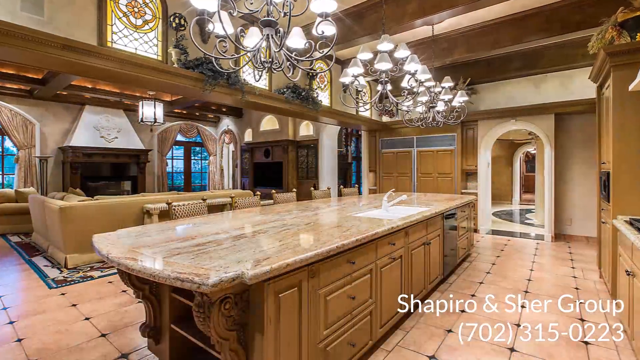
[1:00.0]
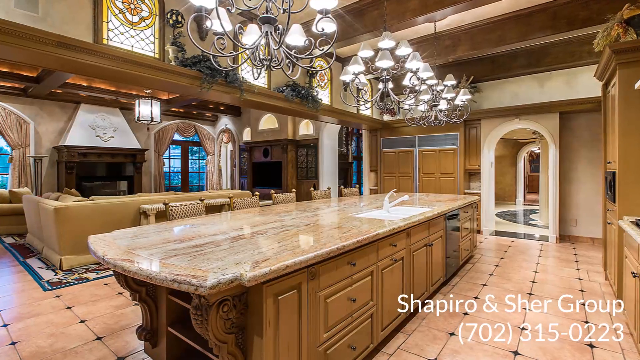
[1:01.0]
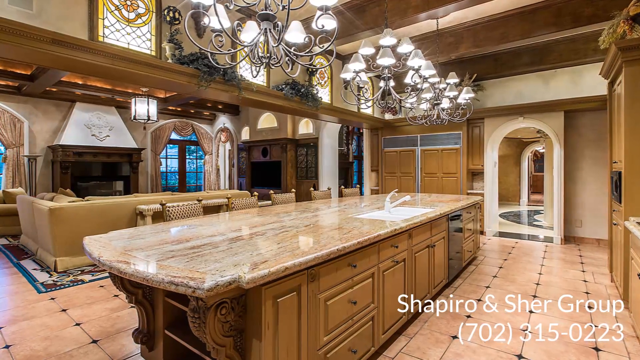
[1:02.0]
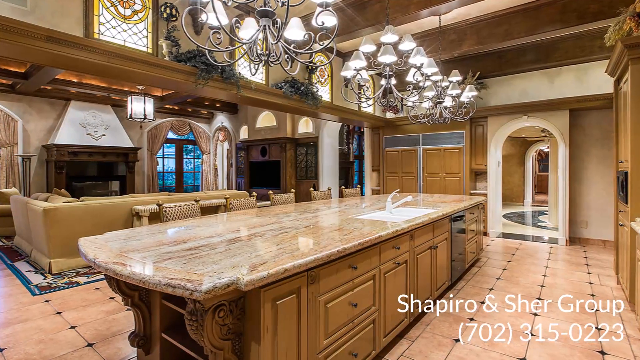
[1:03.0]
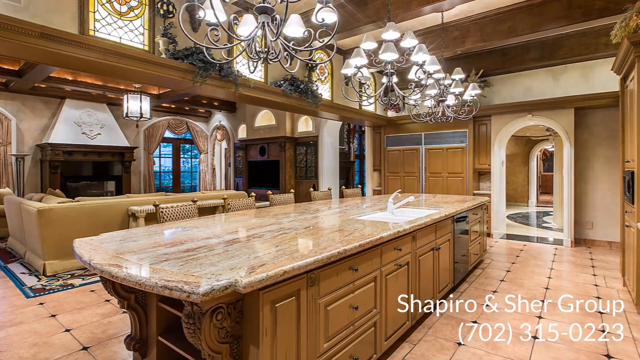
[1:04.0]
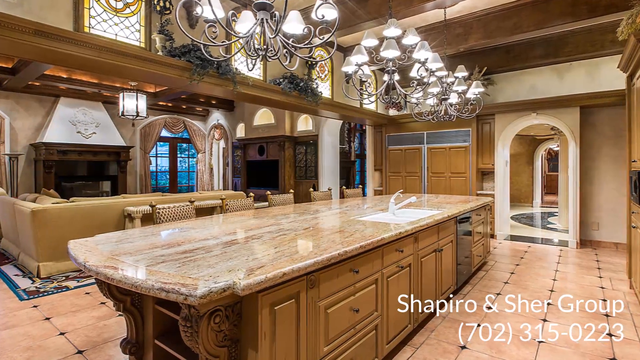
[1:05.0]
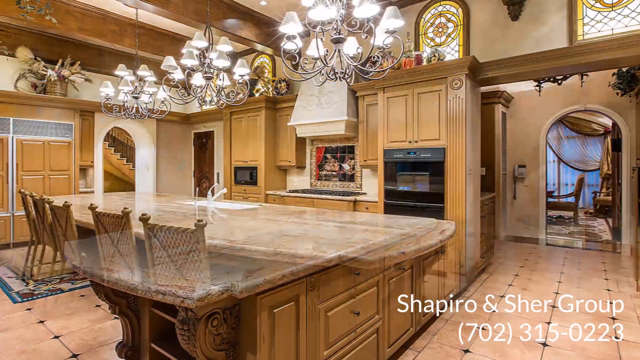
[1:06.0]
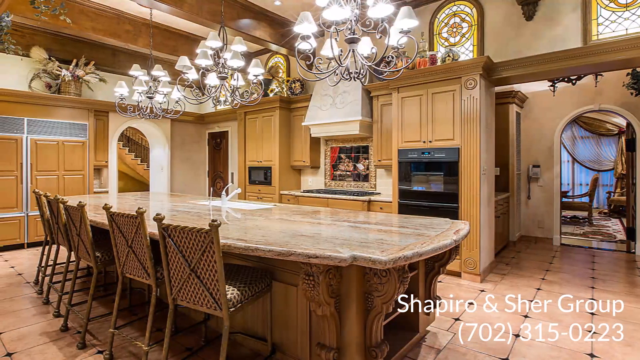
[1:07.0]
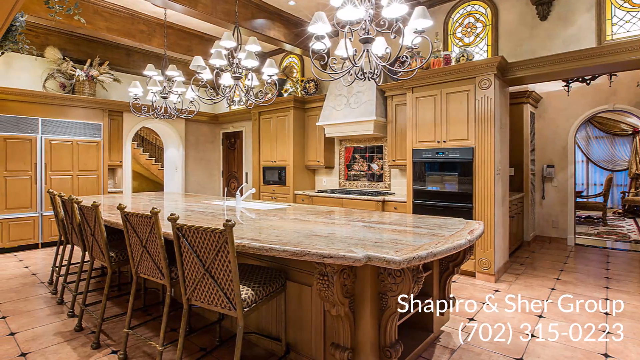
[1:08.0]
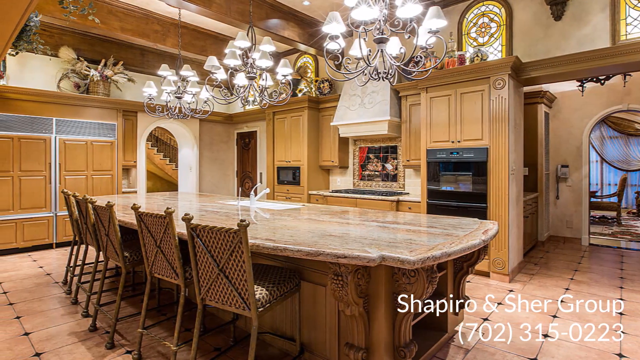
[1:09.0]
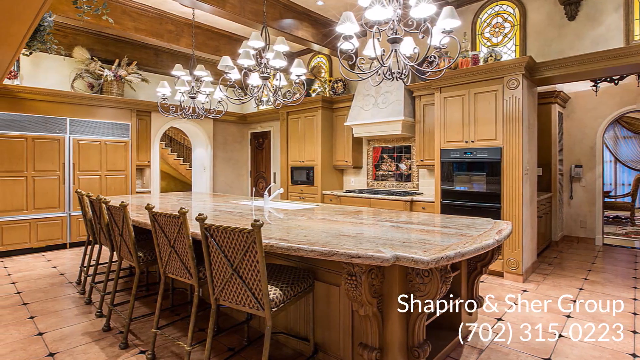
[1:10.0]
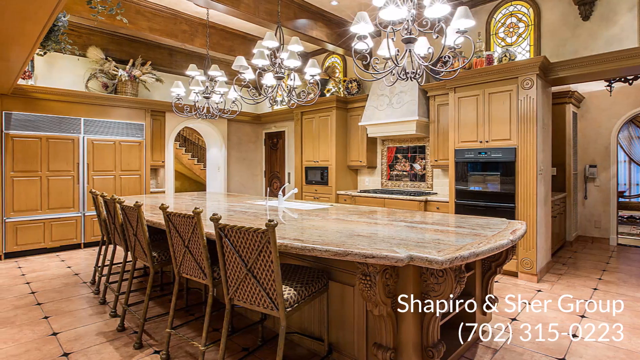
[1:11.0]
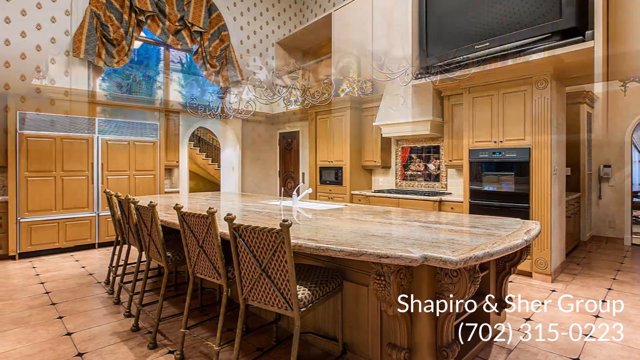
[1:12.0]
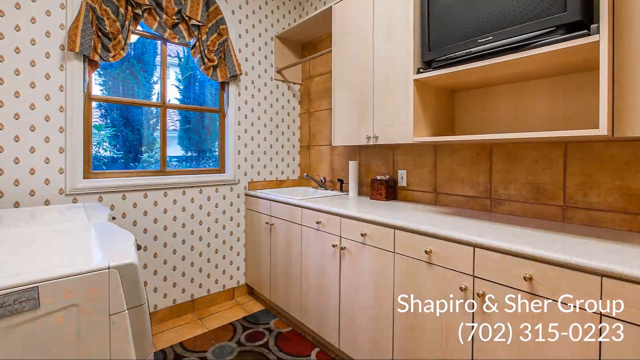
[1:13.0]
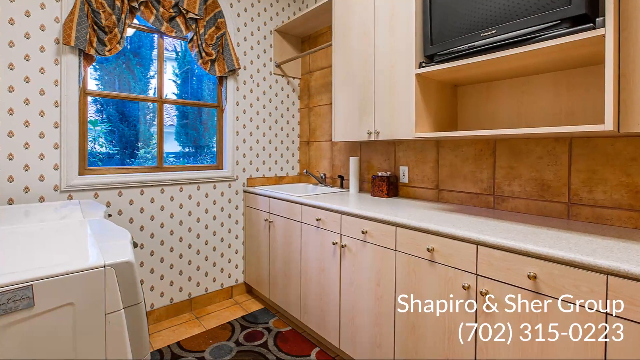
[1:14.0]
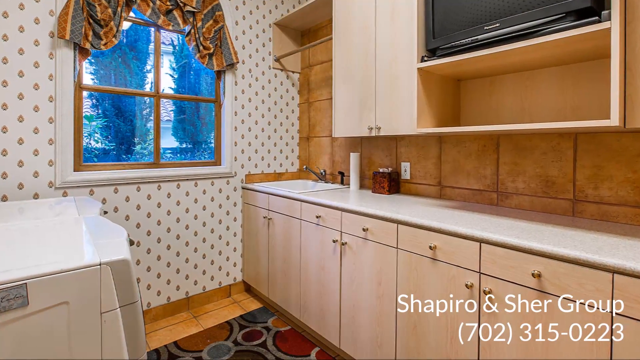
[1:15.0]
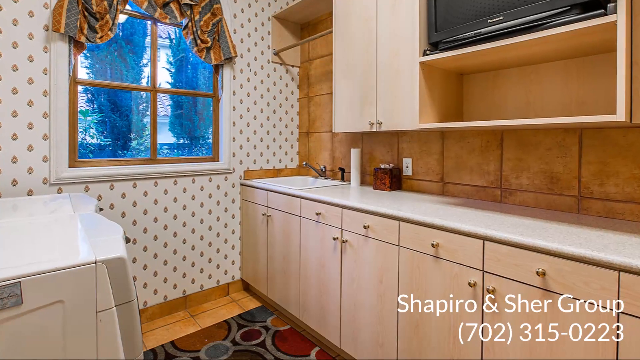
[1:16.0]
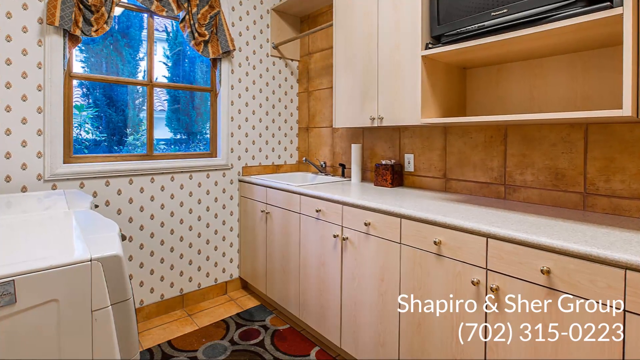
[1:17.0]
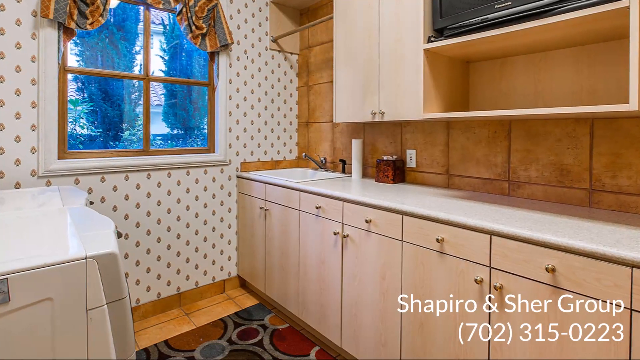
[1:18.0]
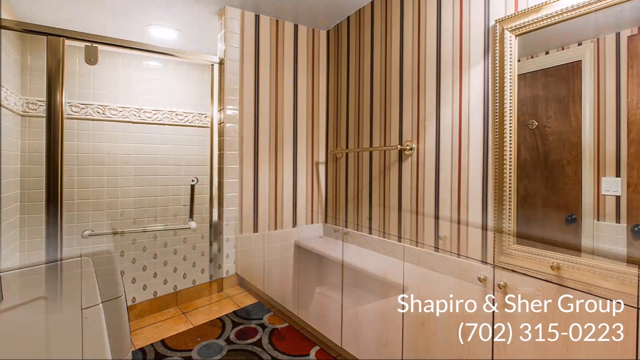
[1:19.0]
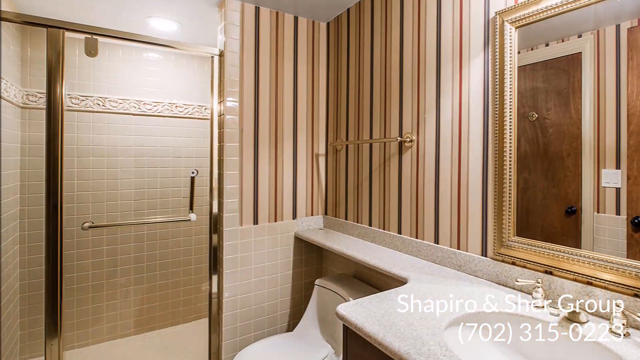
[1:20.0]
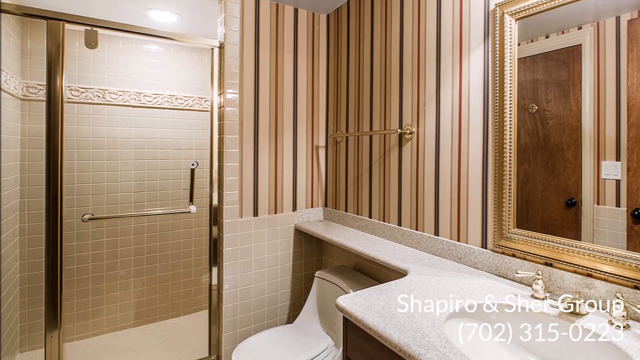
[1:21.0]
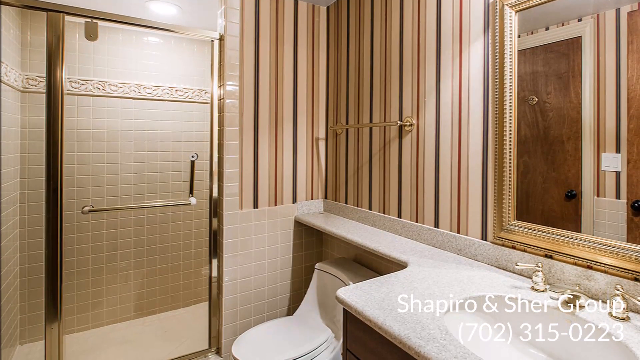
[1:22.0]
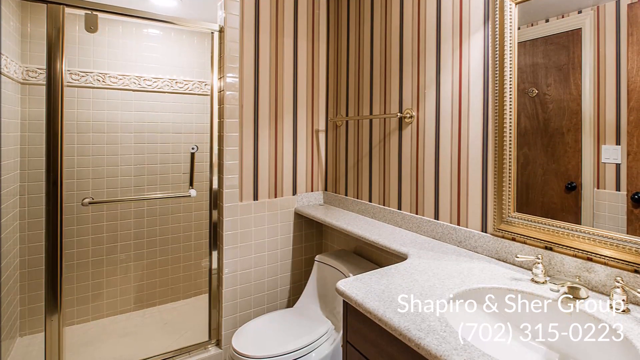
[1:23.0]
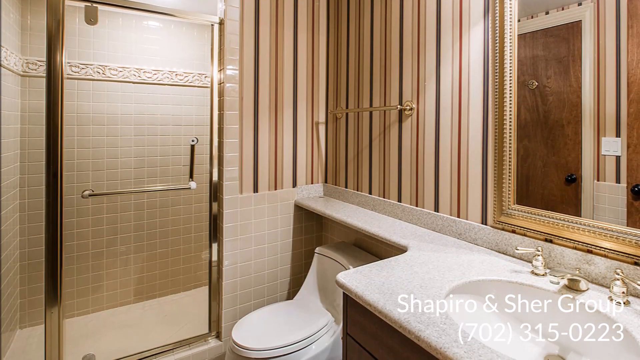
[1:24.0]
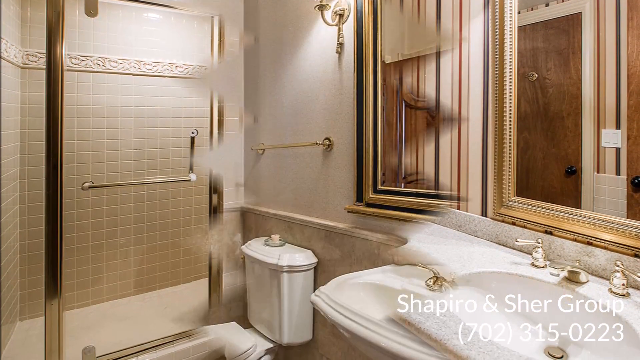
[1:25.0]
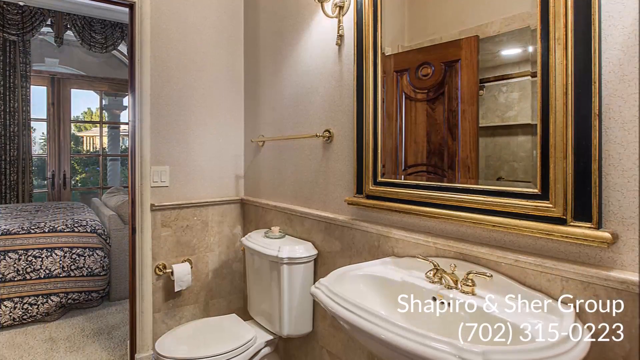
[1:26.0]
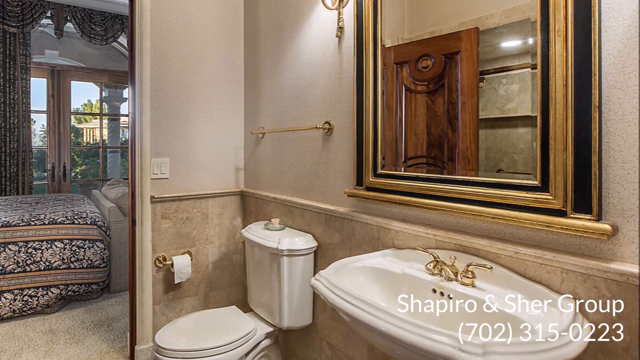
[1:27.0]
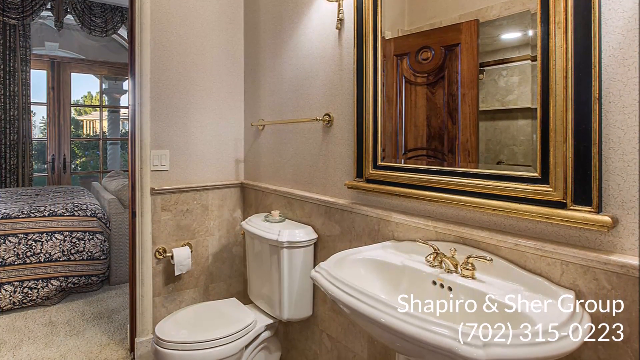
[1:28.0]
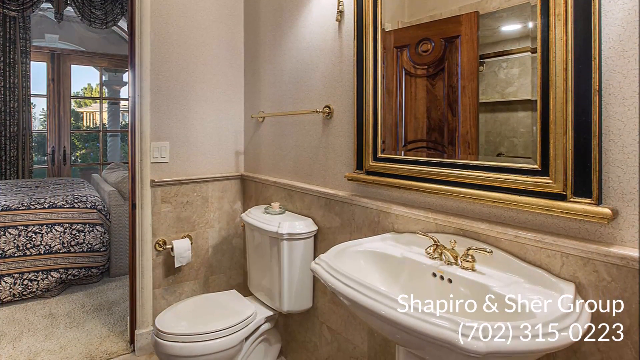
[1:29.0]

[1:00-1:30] The kitchen scene continues with the large counter in the middle. A kitchen sink is installed on the side of the counter closest to the camera, and on the opposite end five chairs are pushed in. Some hanging lights are above the counter. The scene changes to a different view of the kitchen showing the five chairs pushed into the counter. In the distance is what looks like a stove and a hanging pitcher or a mirror. To the right side is an oven, and to the left side there appears to be a small microwave. A telephone hangs on the wall to the right side.